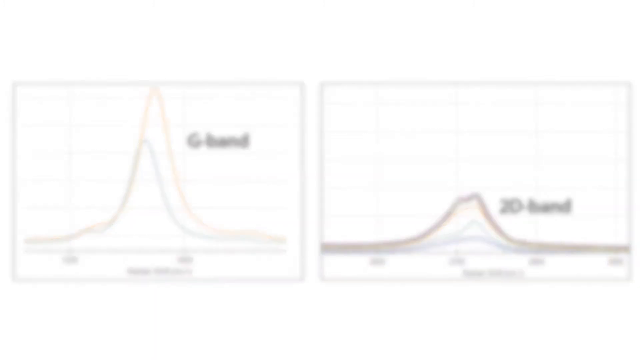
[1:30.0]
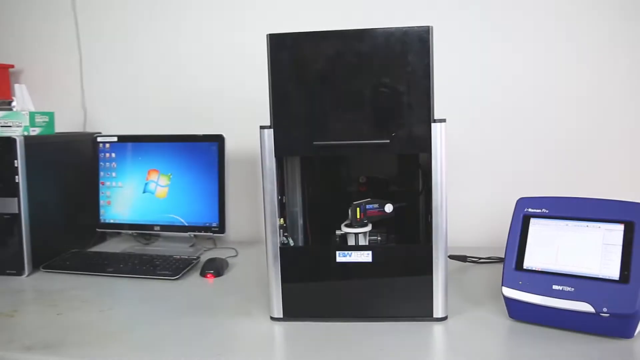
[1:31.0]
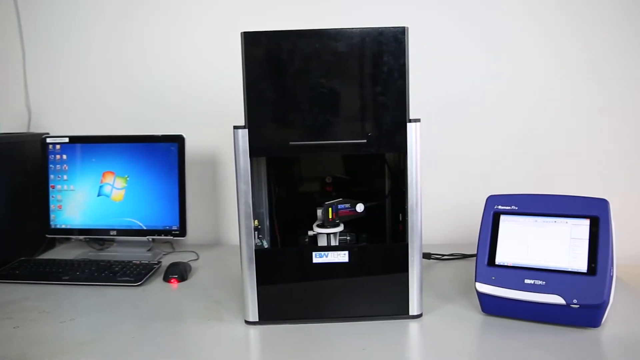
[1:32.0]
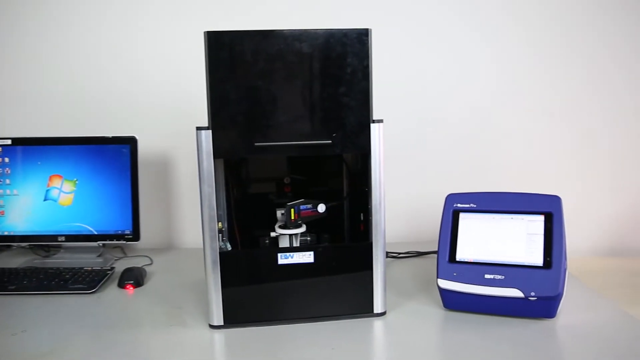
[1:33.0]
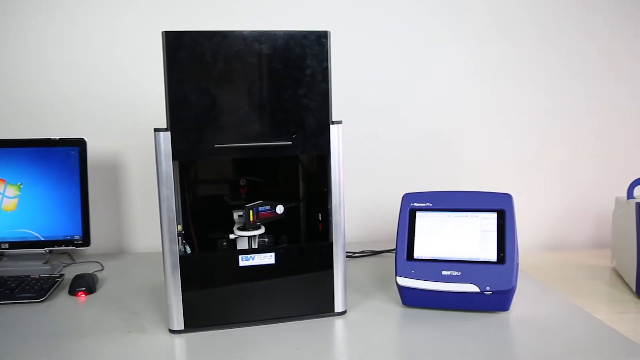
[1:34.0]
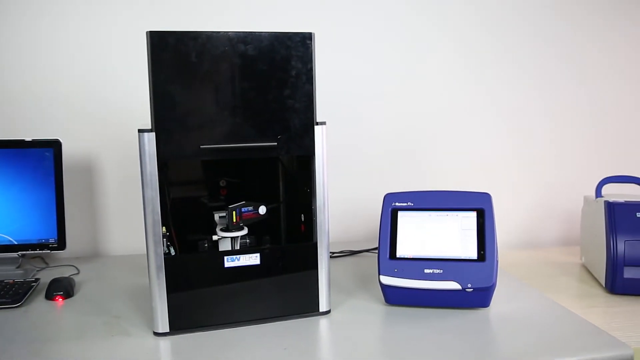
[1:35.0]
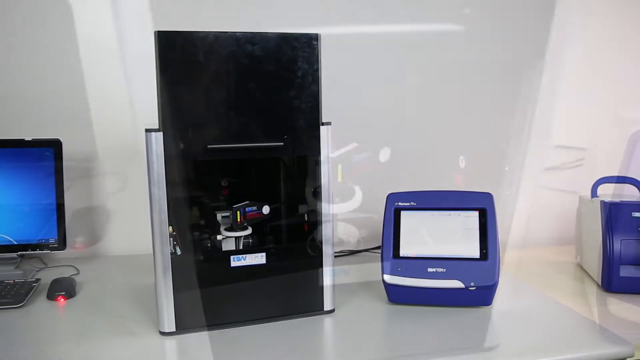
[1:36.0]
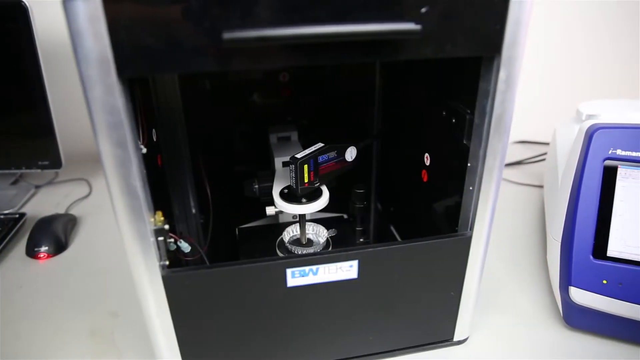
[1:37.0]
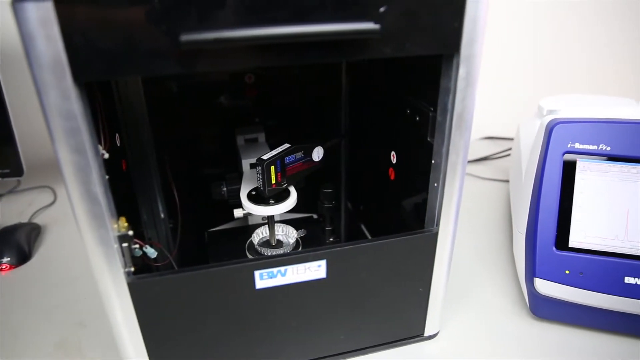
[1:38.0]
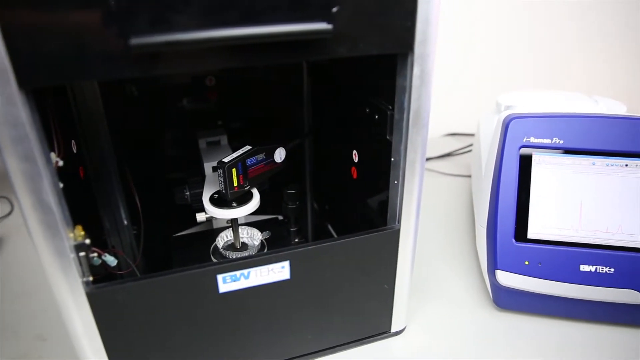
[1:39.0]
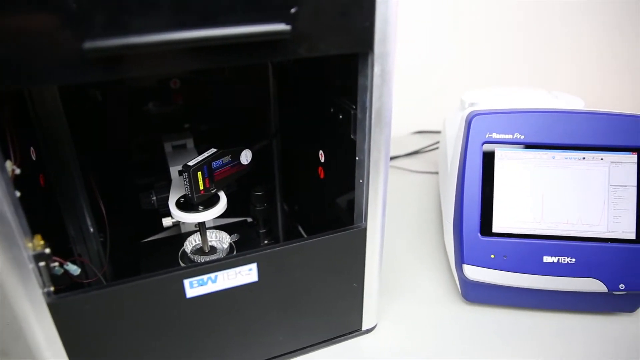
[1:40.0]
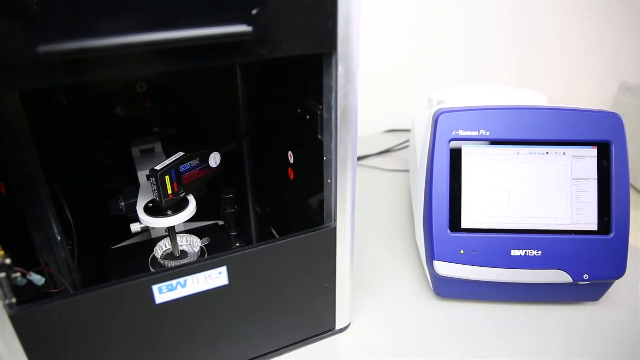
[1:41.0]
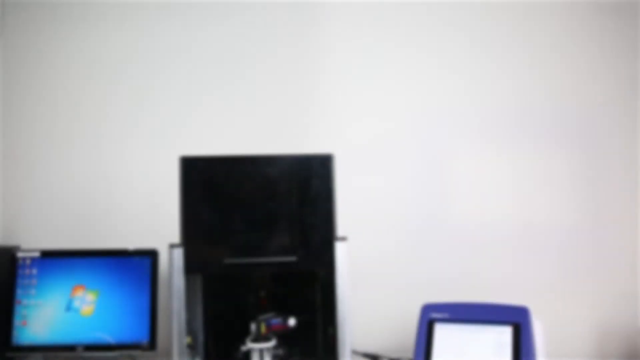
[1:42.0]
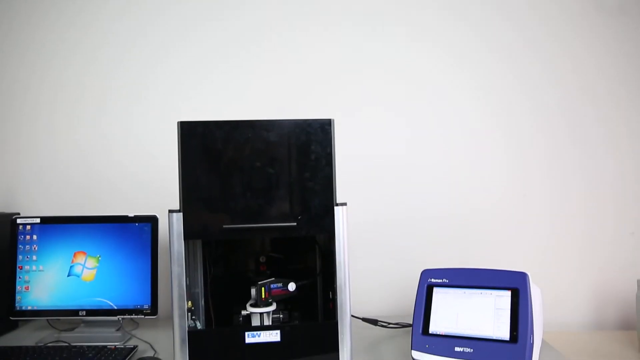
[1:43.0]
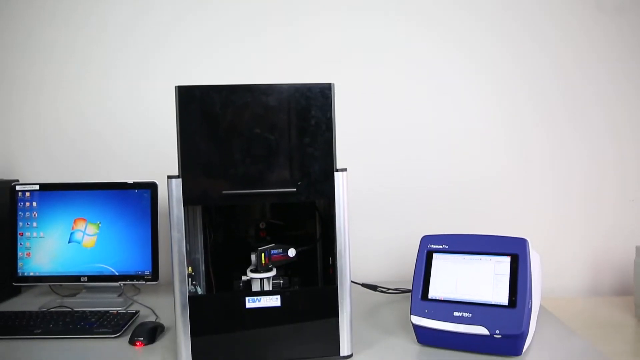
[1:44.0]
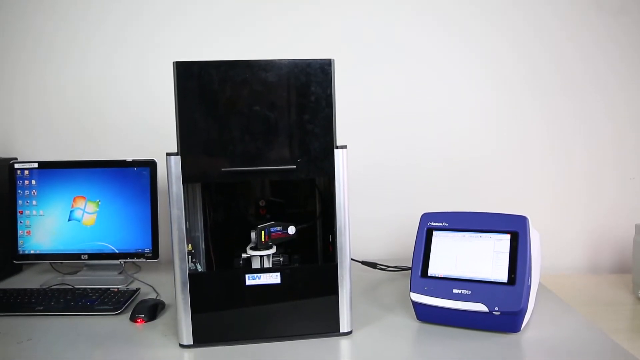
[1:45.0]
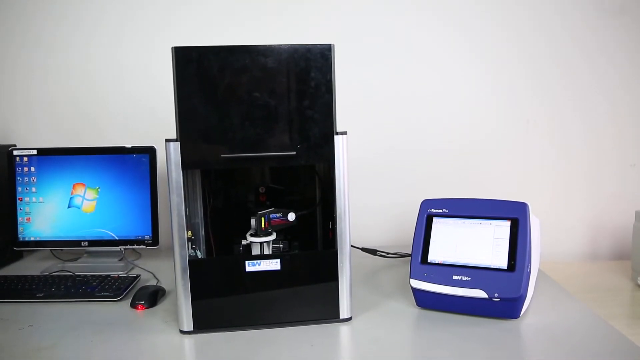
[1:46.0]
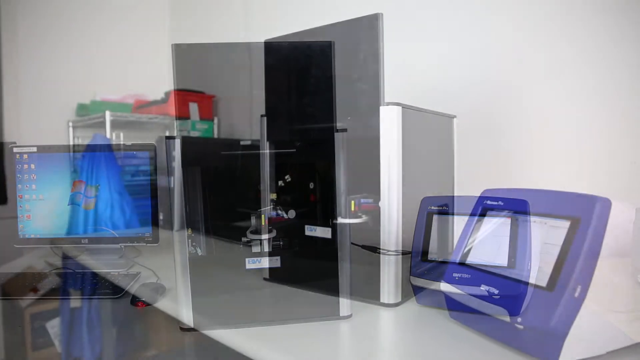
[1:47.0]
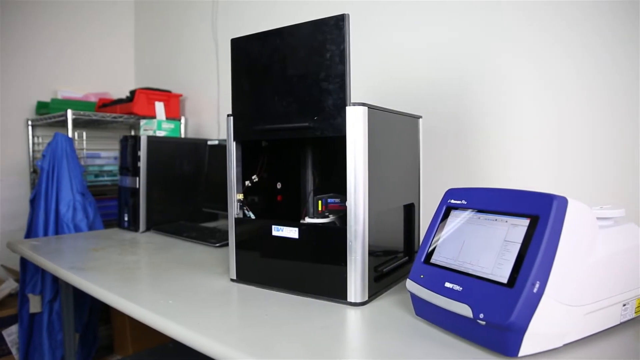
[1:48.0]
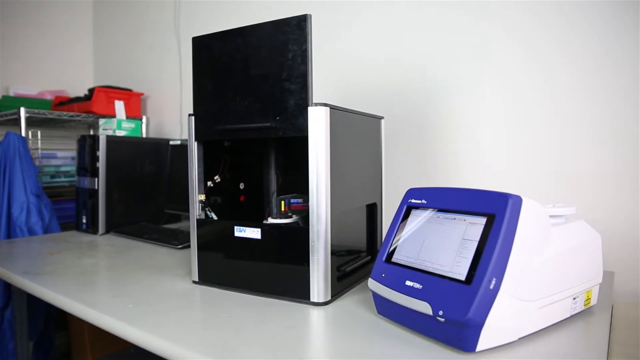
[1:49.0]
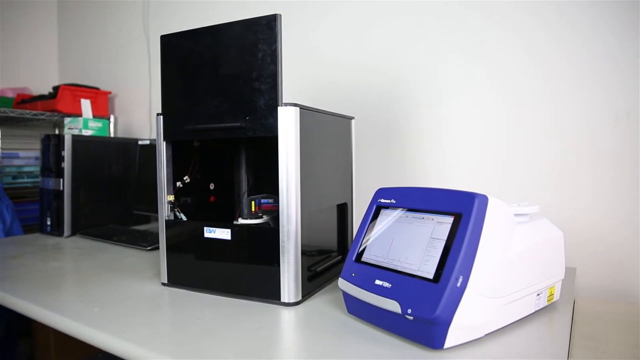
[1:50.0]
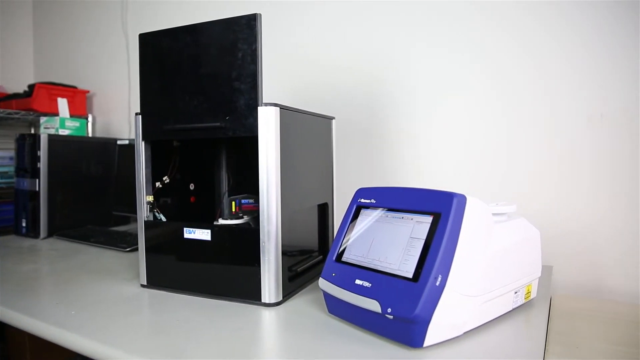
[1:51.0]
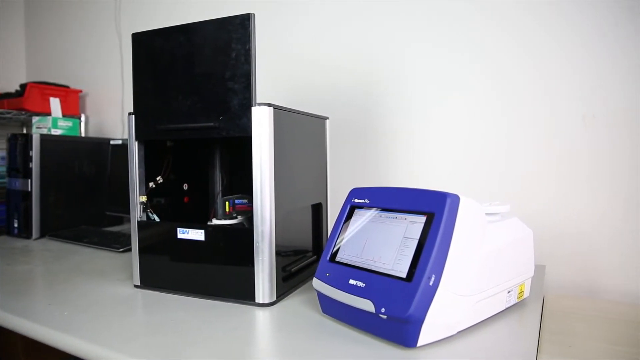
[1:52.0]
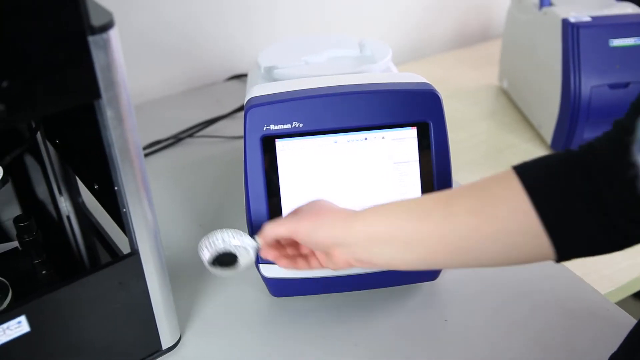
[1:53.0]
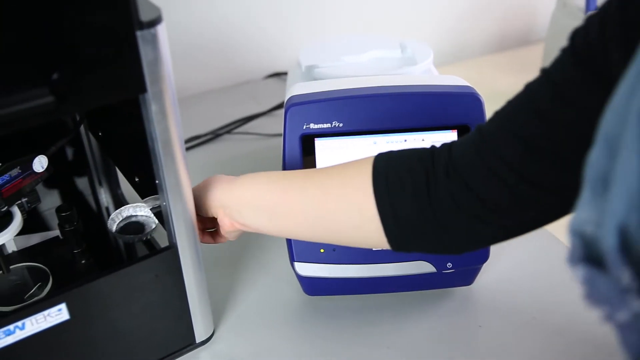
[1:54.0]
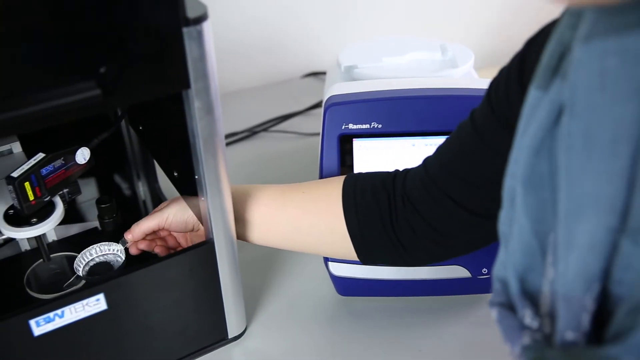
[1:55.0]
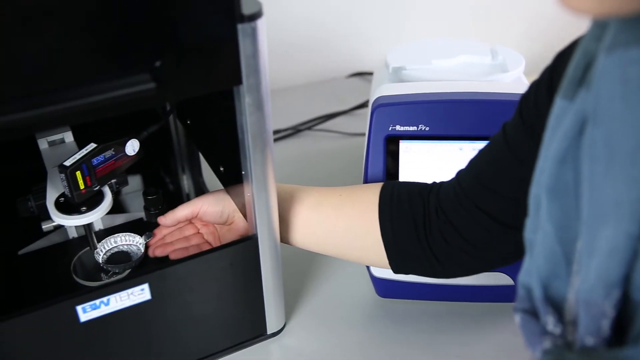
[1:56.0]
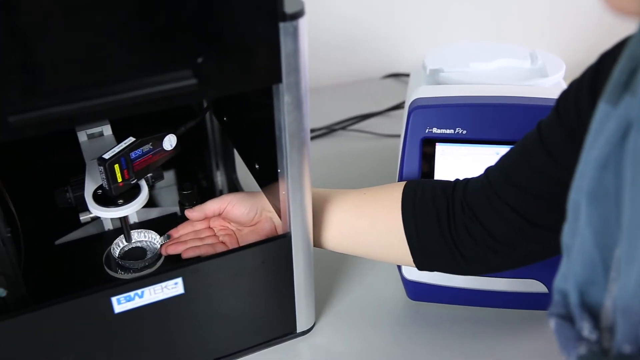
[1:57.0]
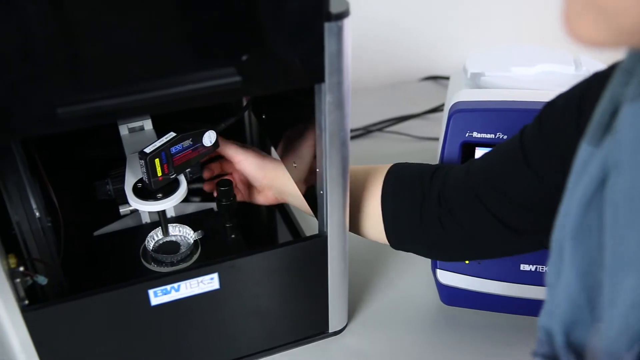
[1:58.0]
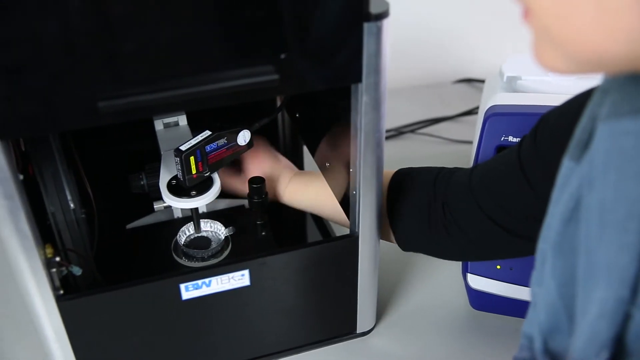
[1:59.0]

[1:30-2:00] A laptop with a window on its screen is on the left and a smaller blue square machine is on the right, apparently on a gray countertop, with a light gray wall in the background. The camera continues to slowly rotate to the right, and part of another blue machine enters the frame. The camera zooms in further, moving from left to right and showing a couple of the machines at a slow angle. The next shot starts upward, then points downward, showing the same machines. Inside the black machine is an open mechanism; the front door appears to be open, sliding upward. The machines are then shown from a more diagonal angle.